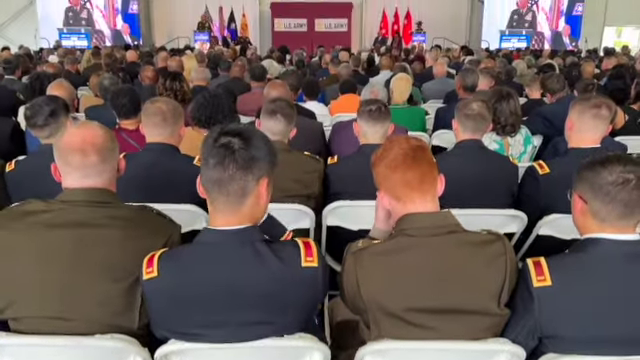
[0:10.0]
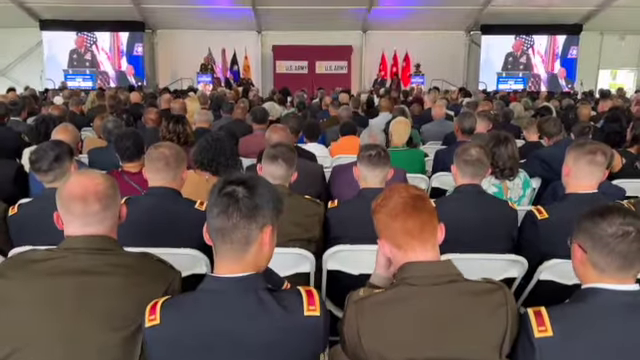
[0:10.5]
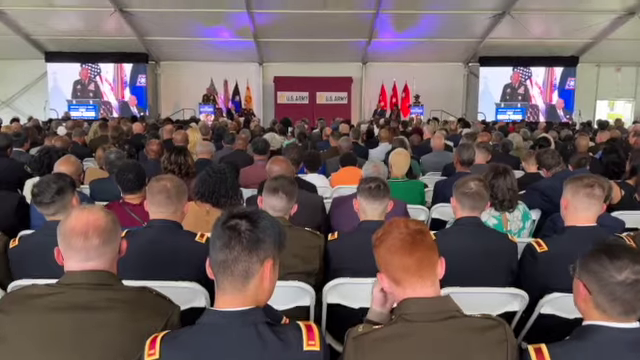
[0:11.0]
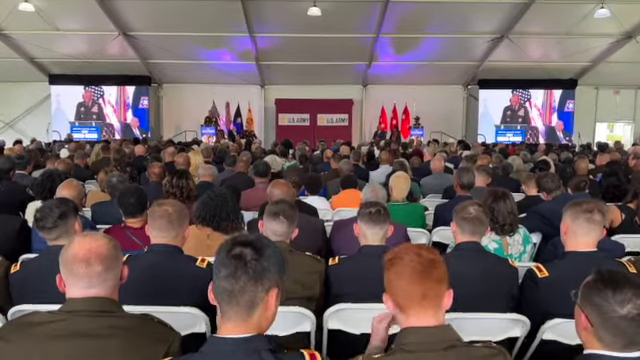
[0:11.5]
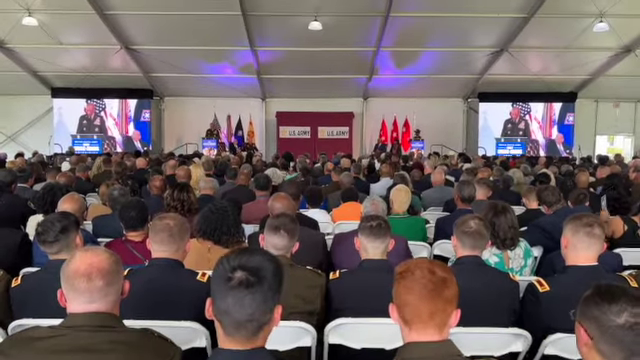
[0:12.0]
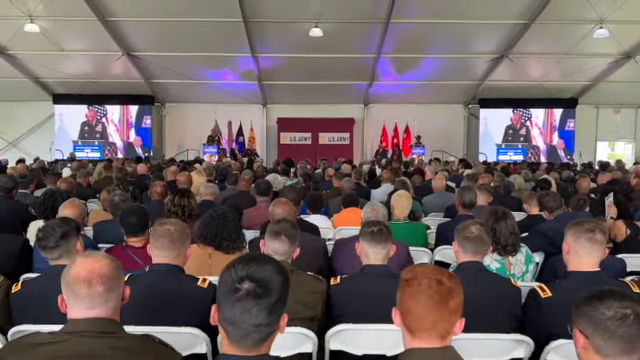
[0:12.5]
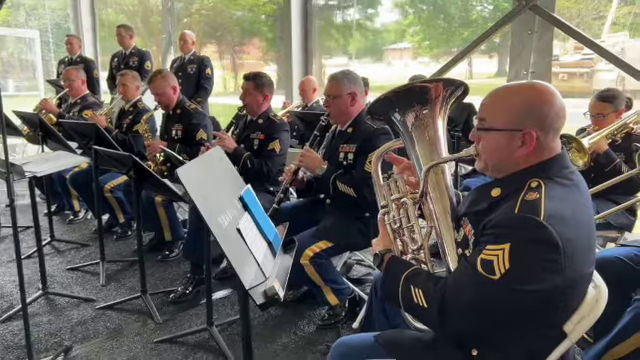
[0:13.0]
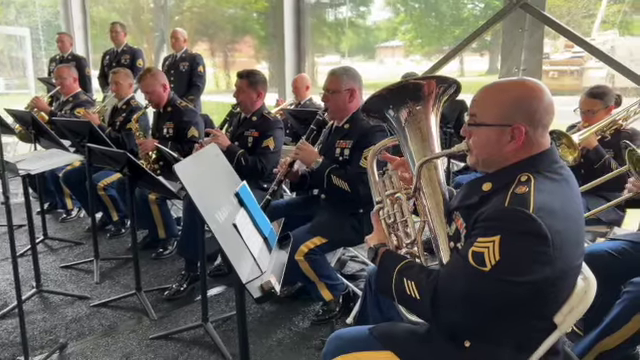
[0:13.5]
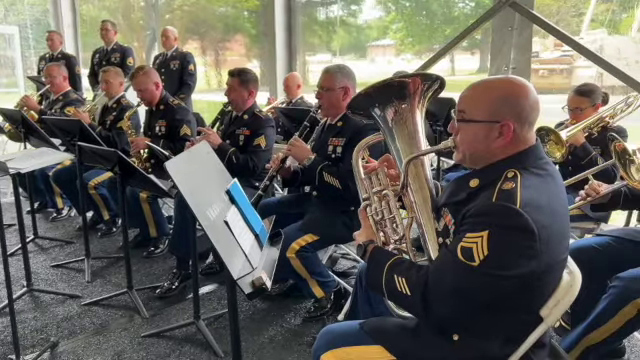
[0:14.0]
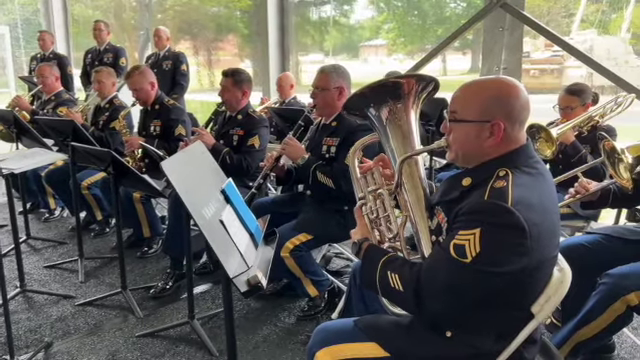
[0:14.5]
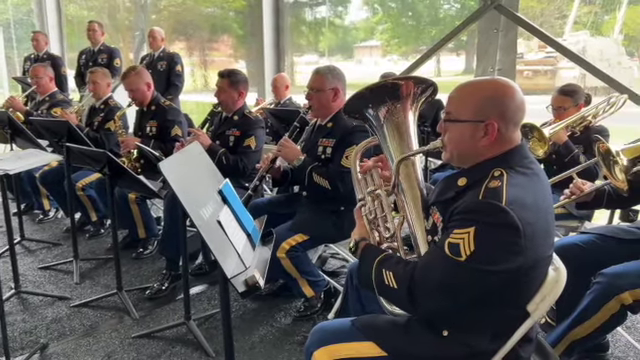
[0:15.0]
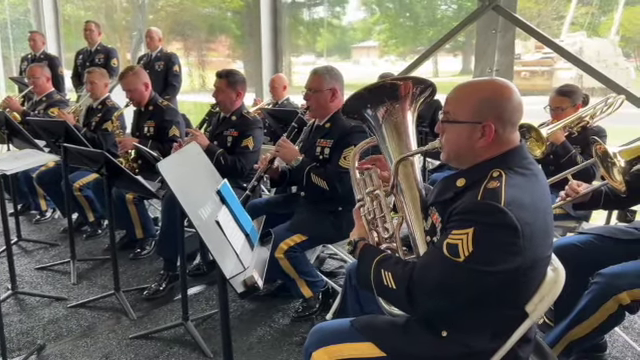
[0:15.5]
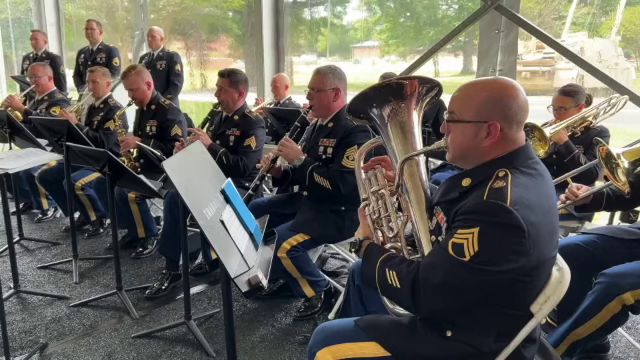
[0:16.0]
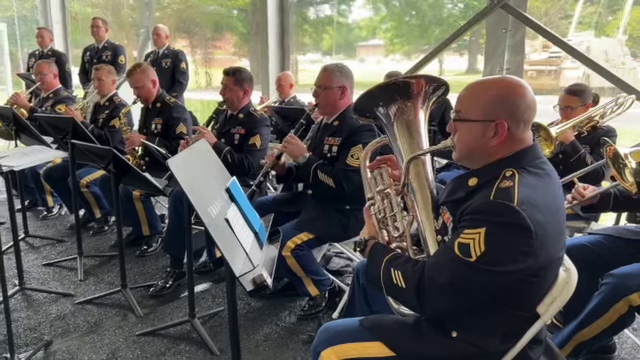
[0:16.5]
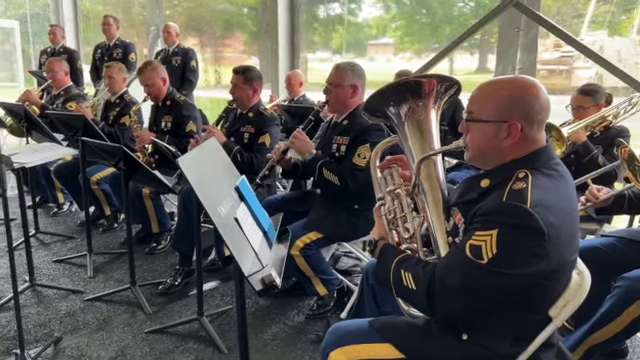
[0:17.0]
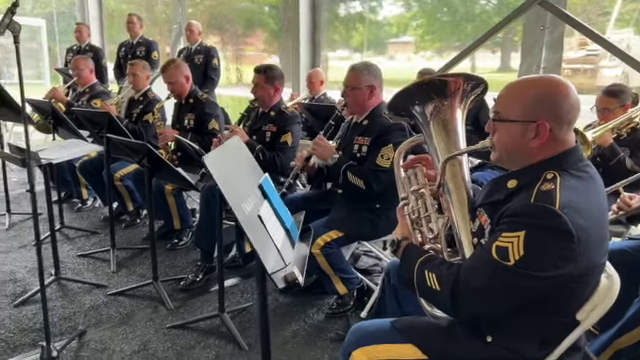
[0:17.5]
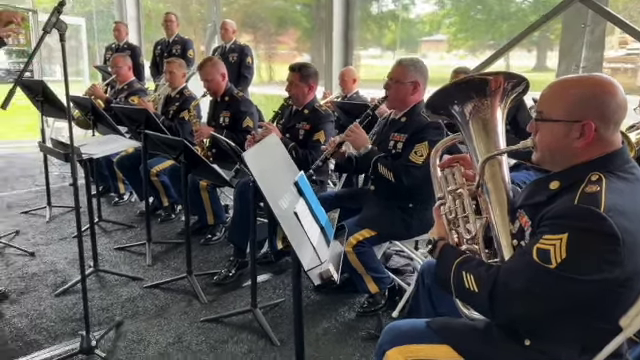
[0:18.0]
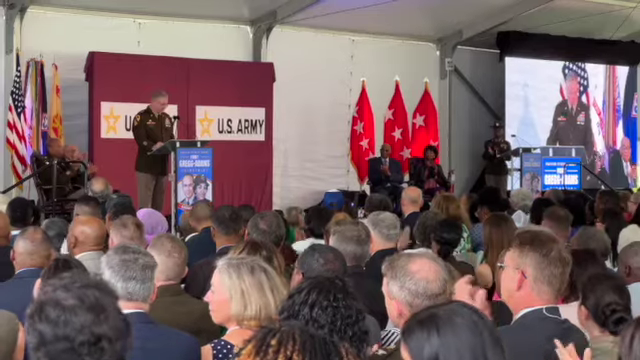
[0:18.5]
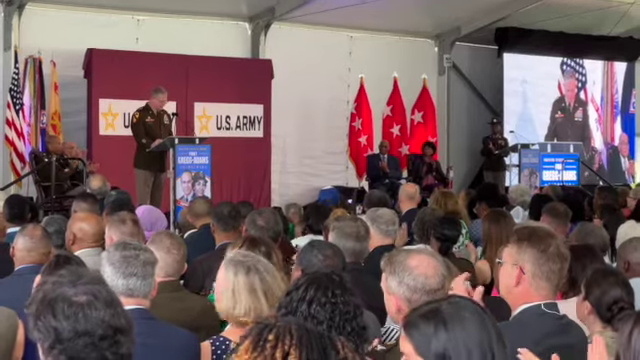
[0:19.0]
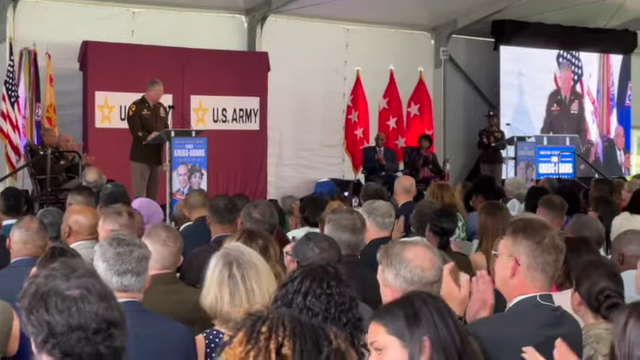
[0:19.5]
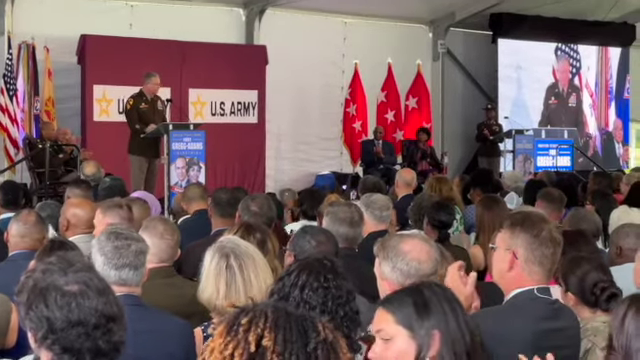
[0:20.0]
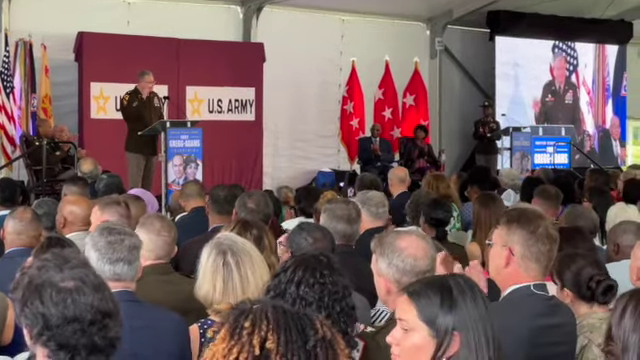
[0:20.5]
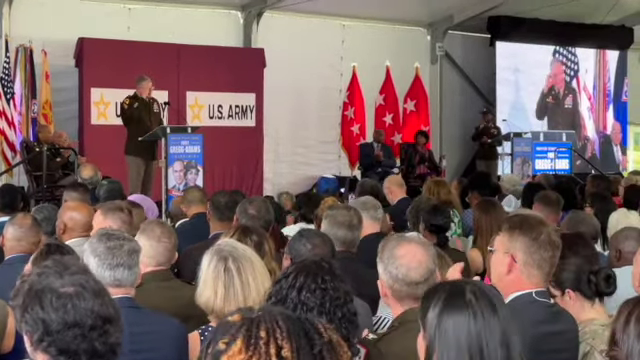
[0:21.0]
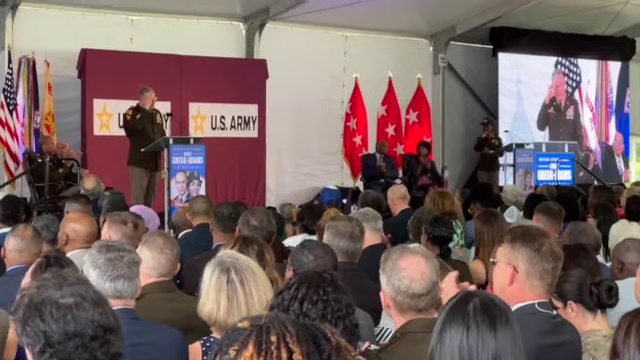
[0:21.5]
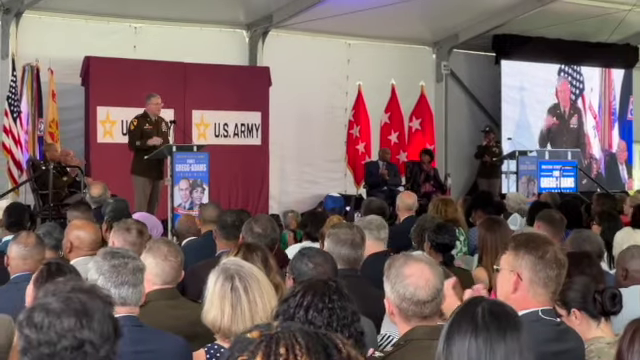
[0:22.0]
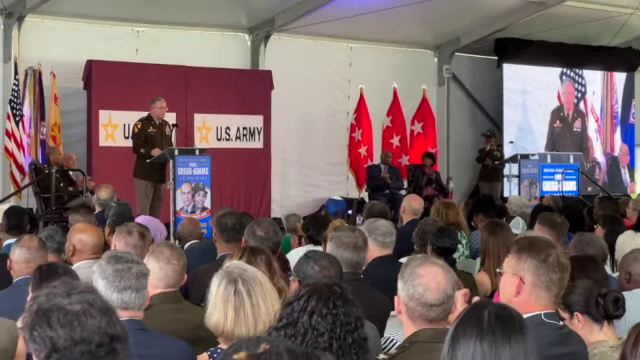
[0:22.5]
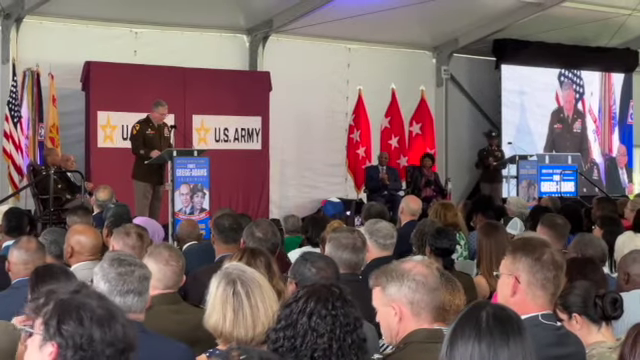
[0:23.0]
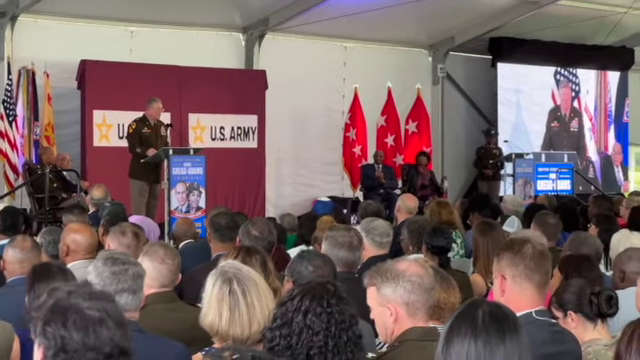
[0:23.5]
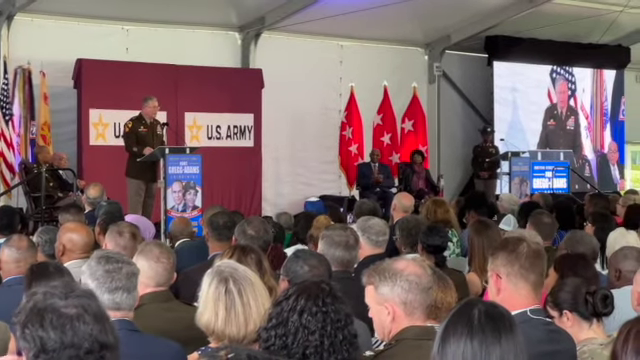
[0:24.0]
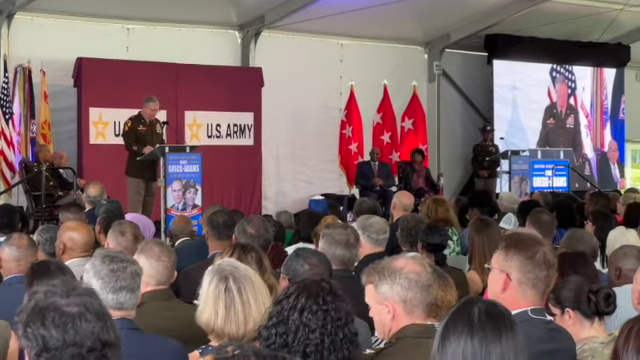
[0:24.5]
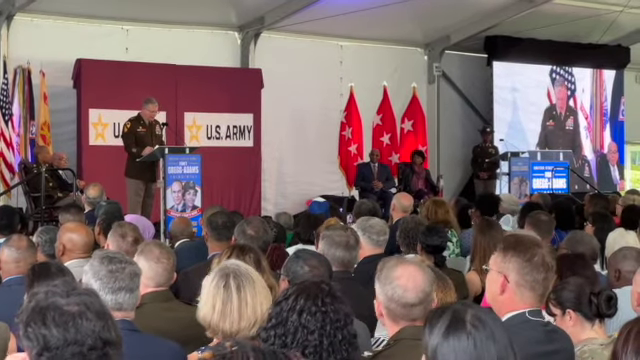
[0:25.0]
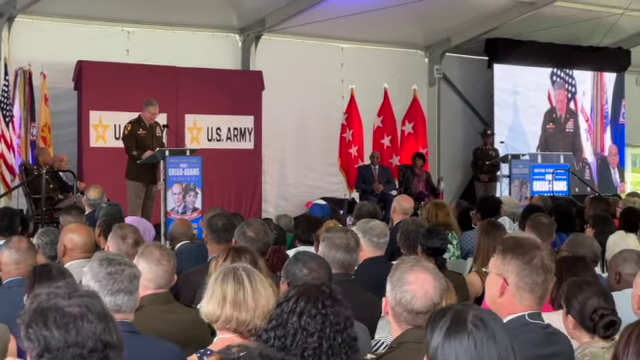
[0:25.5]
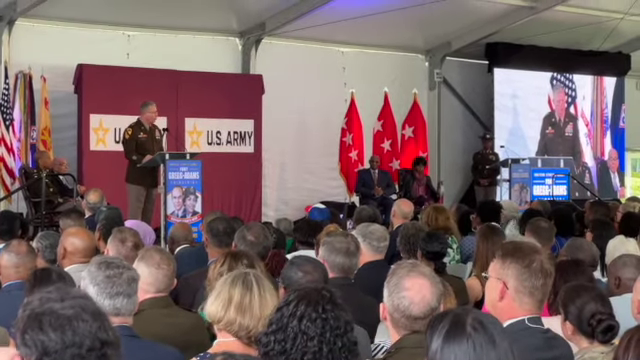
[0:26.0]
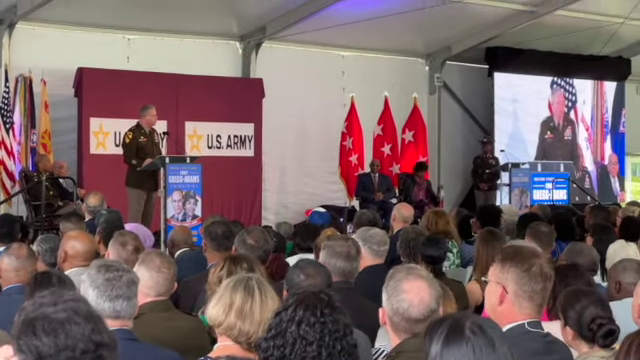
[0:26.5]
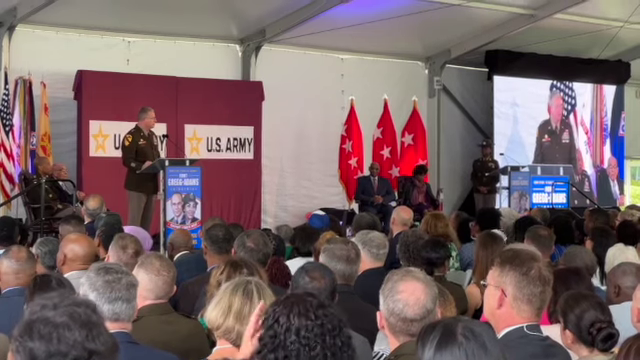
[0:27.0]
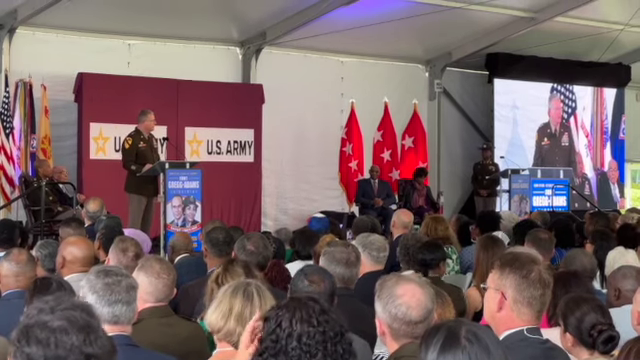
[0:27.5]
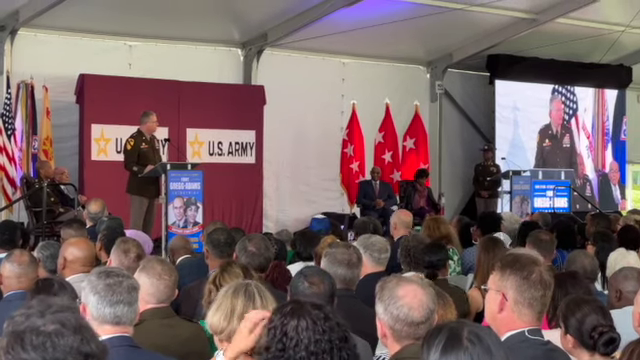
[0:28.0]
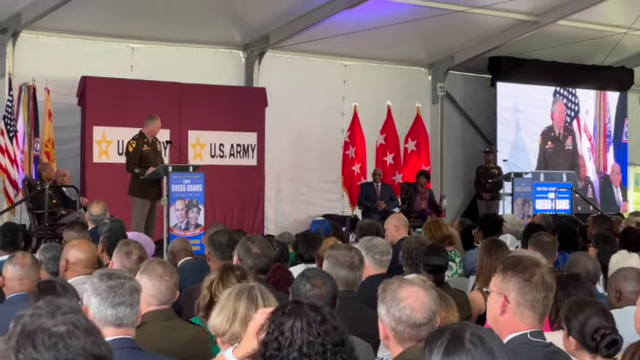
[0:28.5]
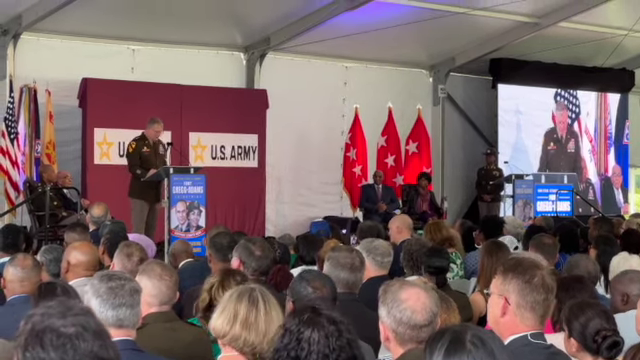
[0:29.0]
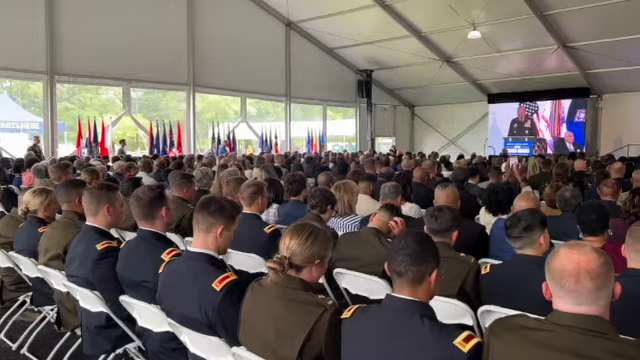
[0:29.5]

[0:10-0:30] More of the band presentation and the audience are shown. The audience seems to be younger members of the military and their families. A man on stage stands at a podium, looking down at some notes as he talks. A video plays on a big screen, showing a man speaking from a podium, standing in front of some flags. Military personnel remain in the audience, some wearing dress blues and some wearing greens, along with what seem to be family members, probably spouses and parents. The chairs they sit in are white and seem to be metal or plastic. Several flags are on stage besides the U.S. flag: the Army flag, some red flags of unclear meaning, and what appears to be the state of Virginia flag, though it is hard to make out.